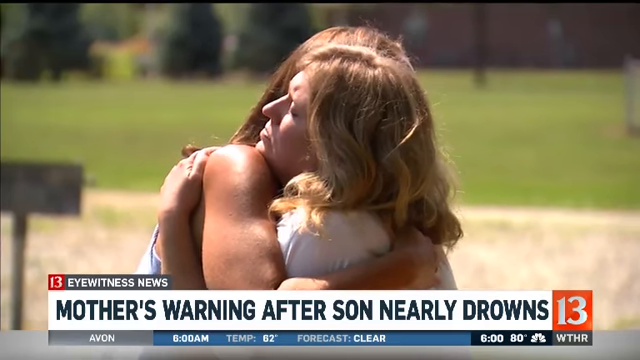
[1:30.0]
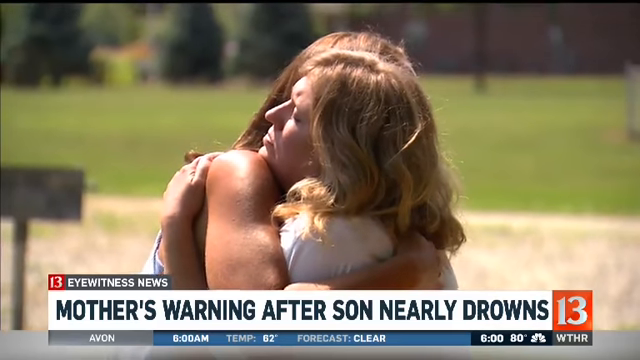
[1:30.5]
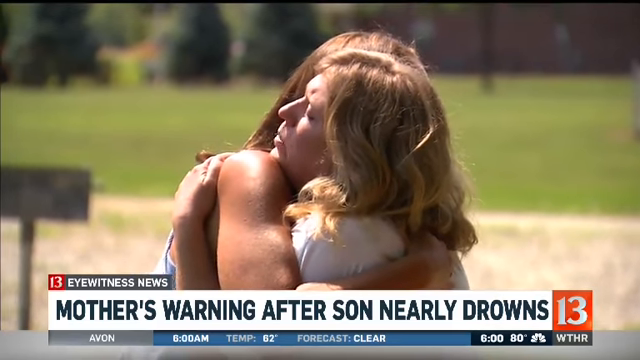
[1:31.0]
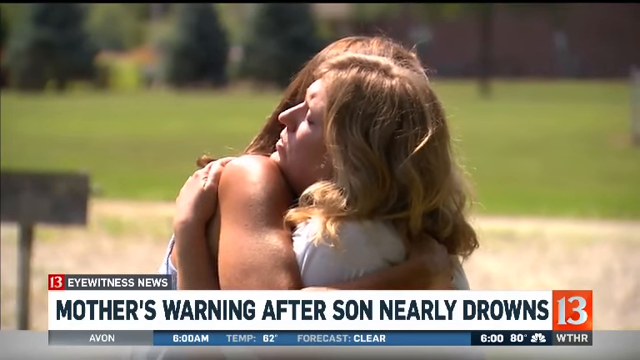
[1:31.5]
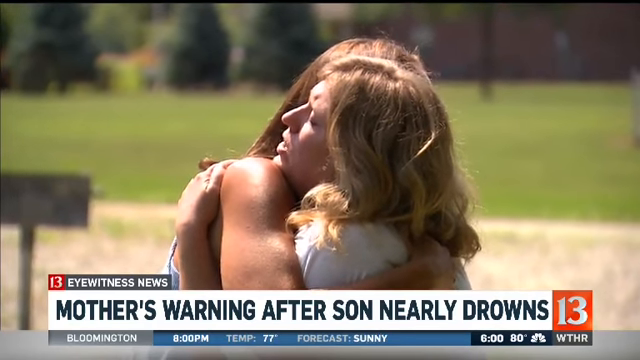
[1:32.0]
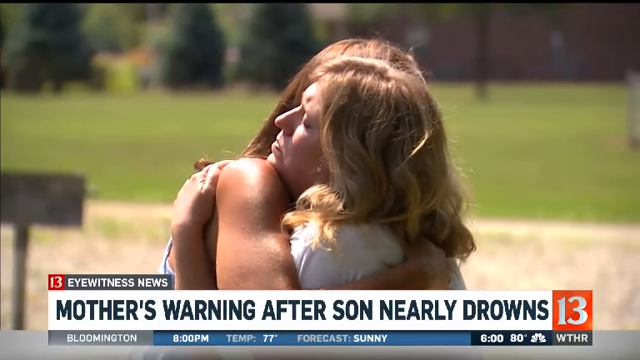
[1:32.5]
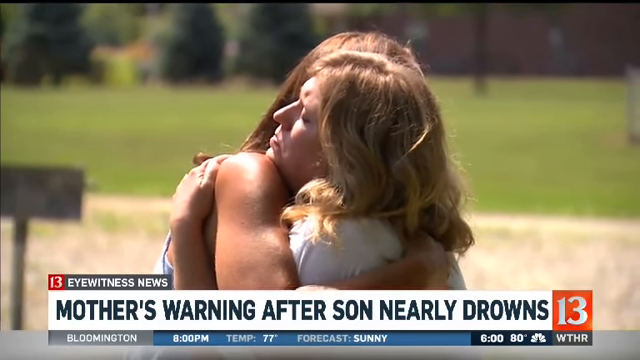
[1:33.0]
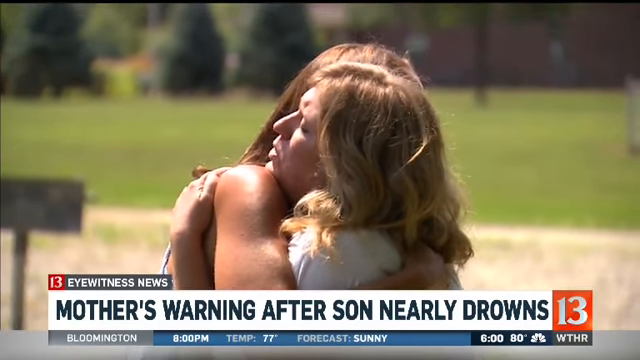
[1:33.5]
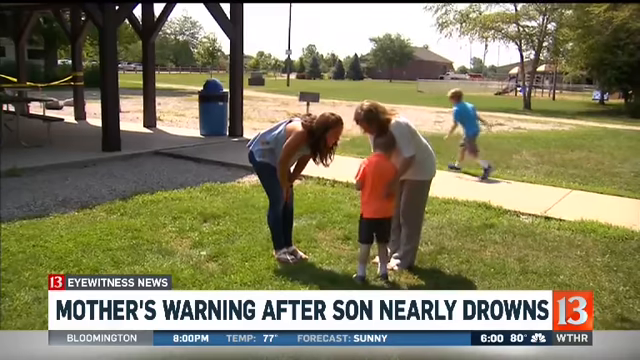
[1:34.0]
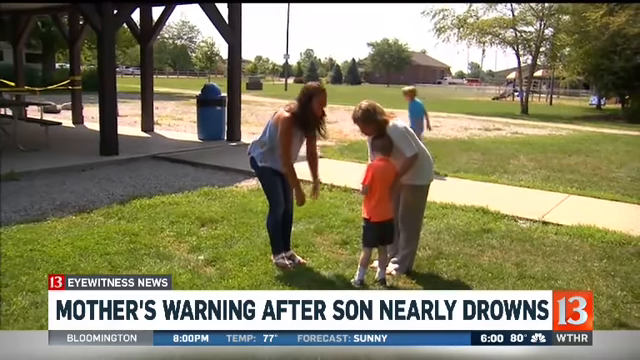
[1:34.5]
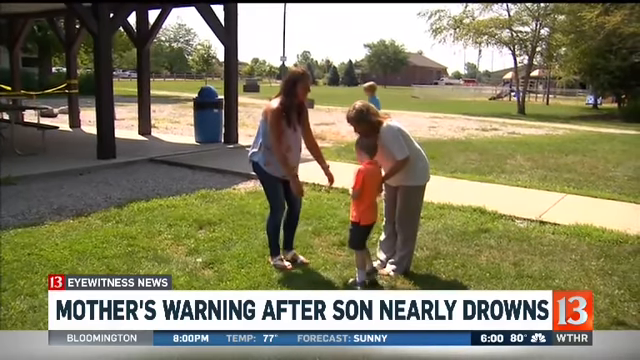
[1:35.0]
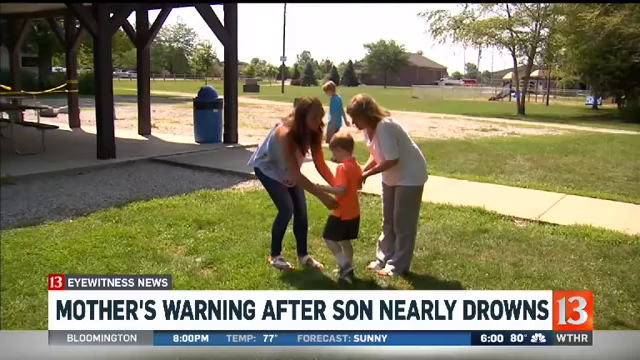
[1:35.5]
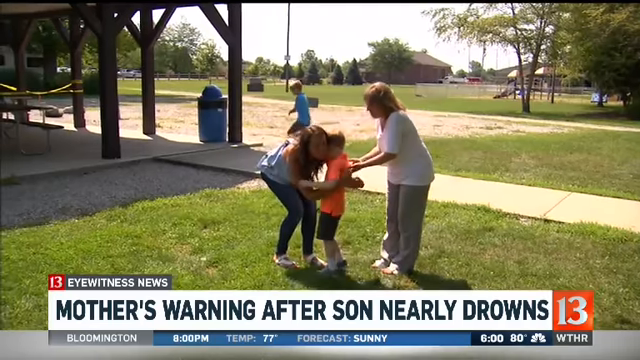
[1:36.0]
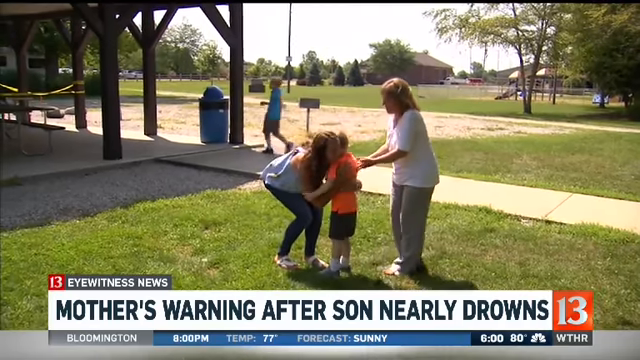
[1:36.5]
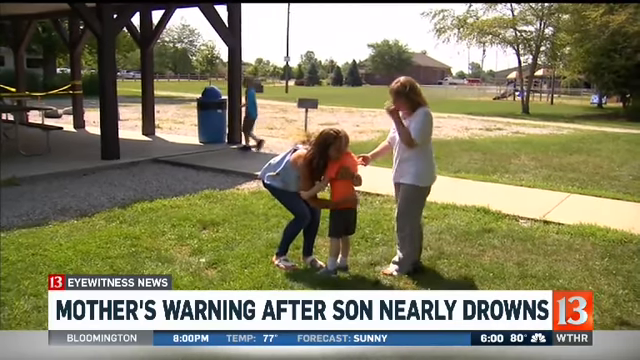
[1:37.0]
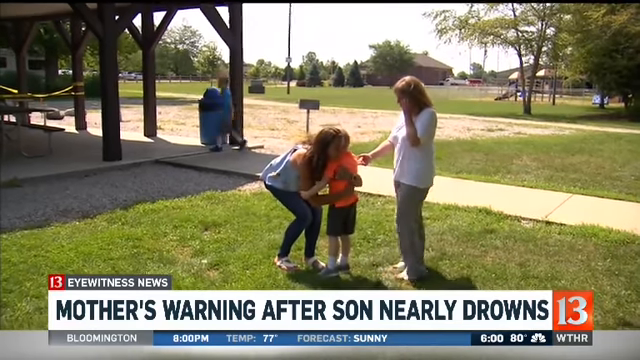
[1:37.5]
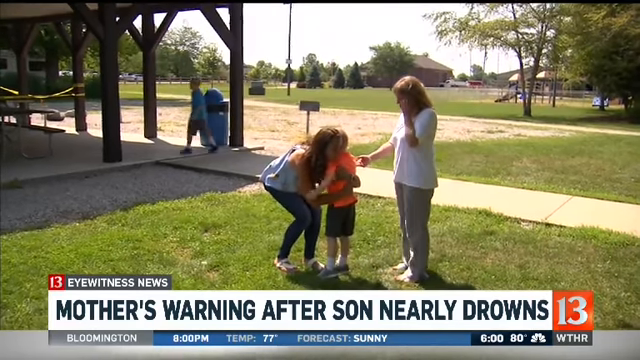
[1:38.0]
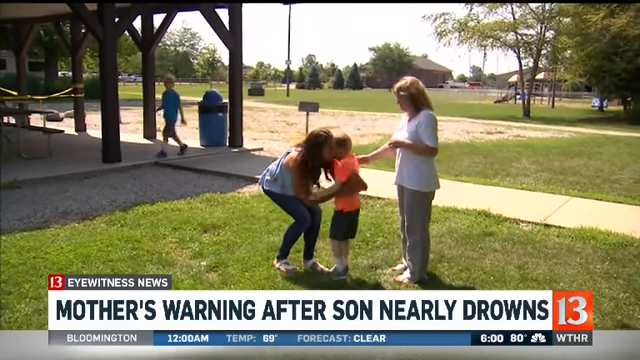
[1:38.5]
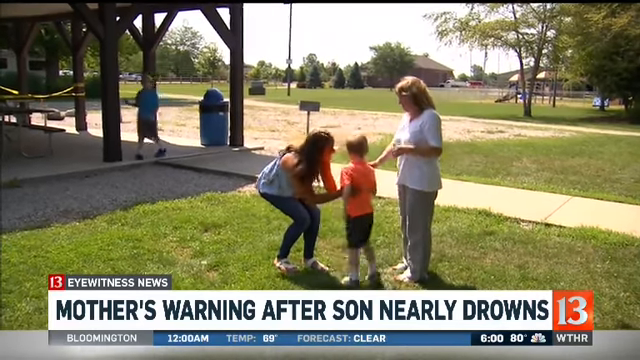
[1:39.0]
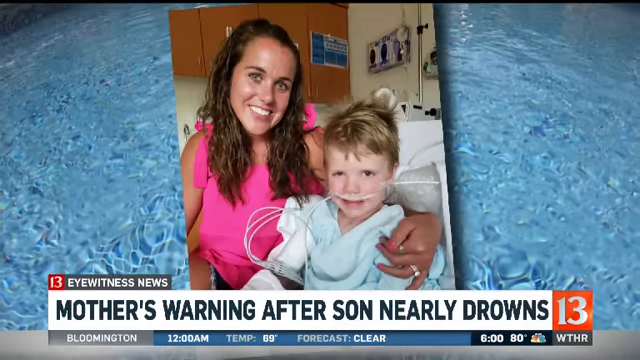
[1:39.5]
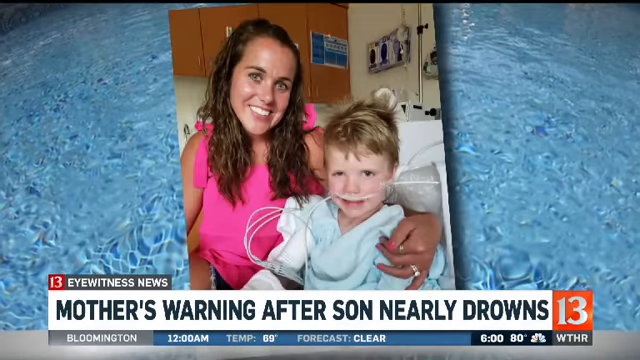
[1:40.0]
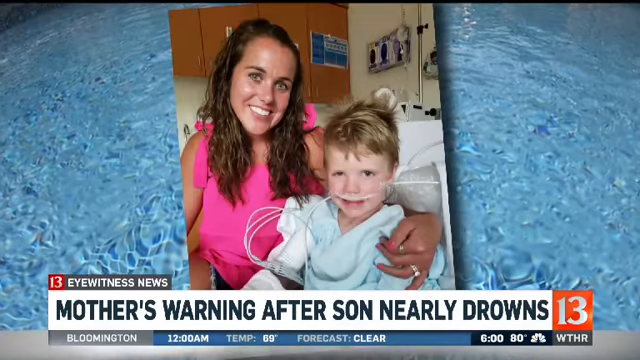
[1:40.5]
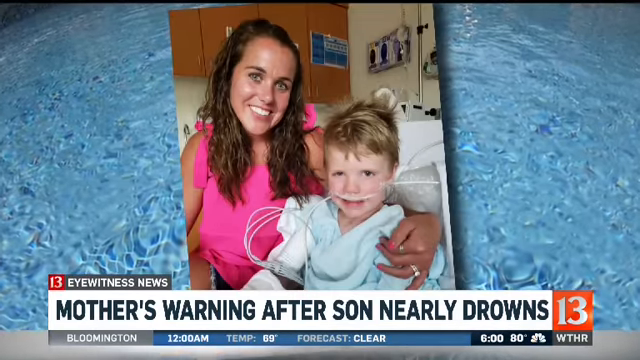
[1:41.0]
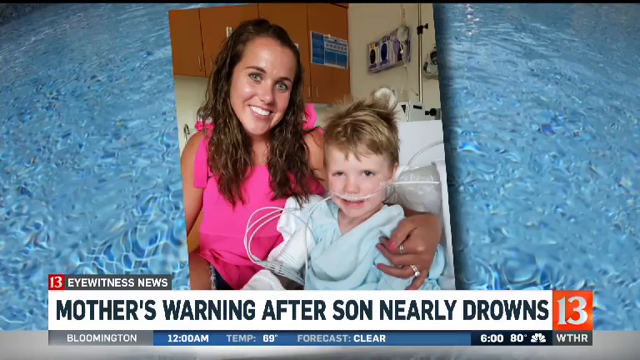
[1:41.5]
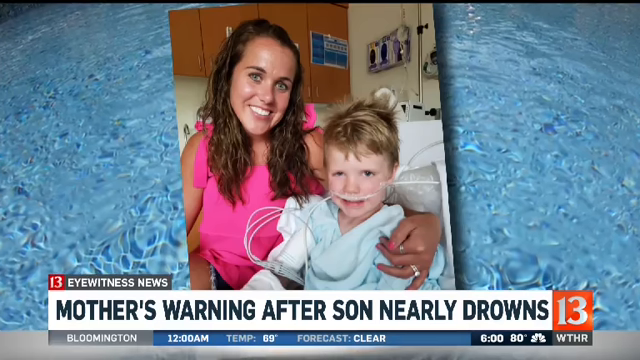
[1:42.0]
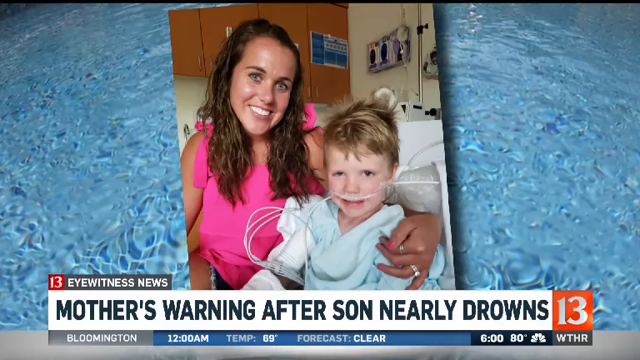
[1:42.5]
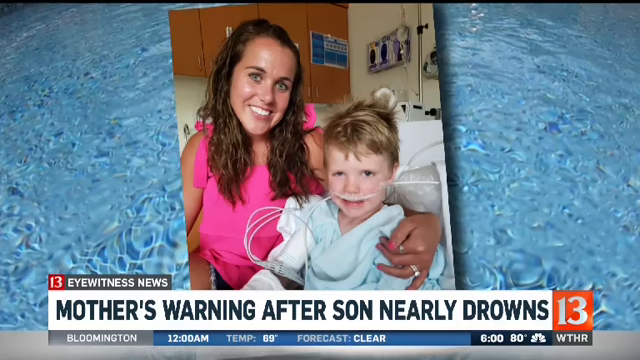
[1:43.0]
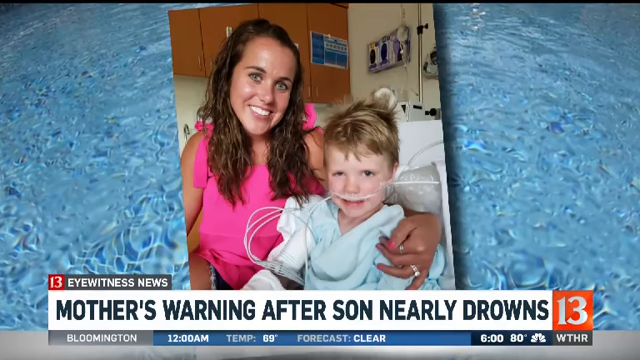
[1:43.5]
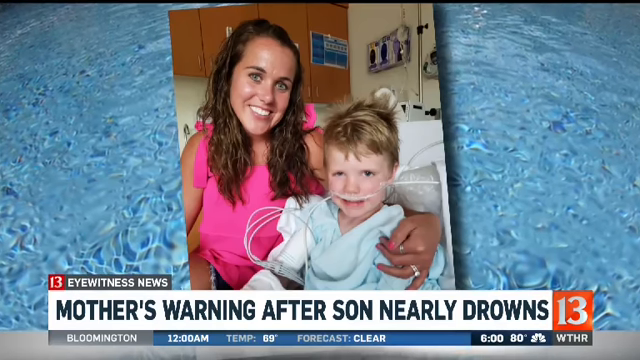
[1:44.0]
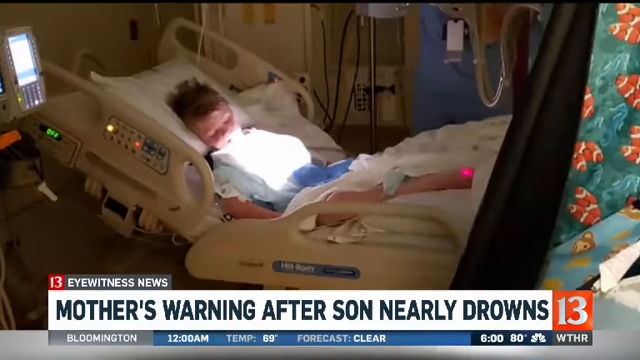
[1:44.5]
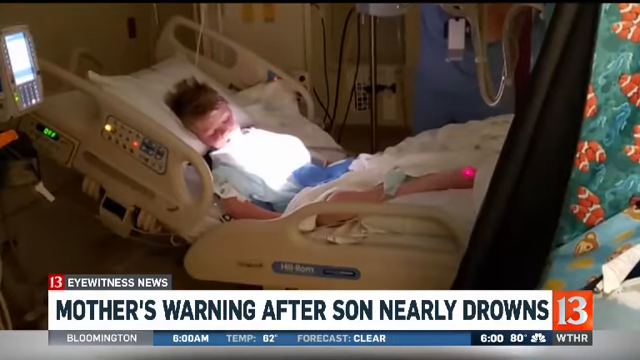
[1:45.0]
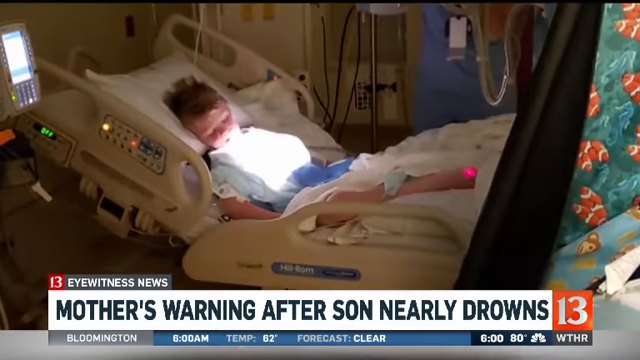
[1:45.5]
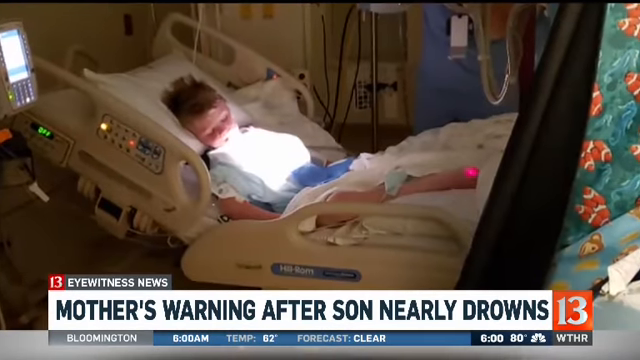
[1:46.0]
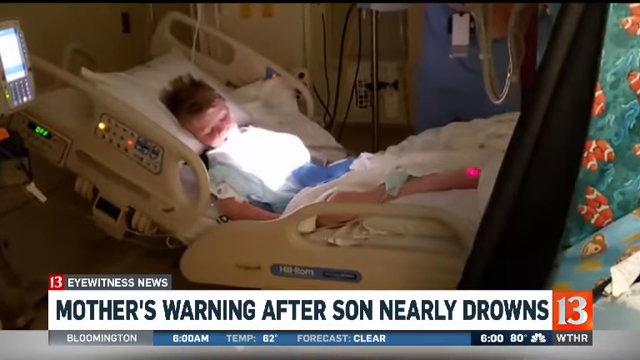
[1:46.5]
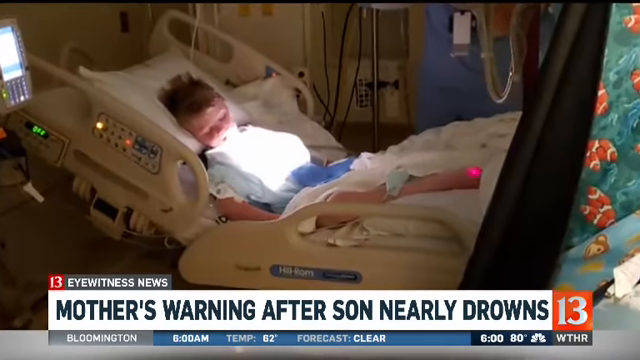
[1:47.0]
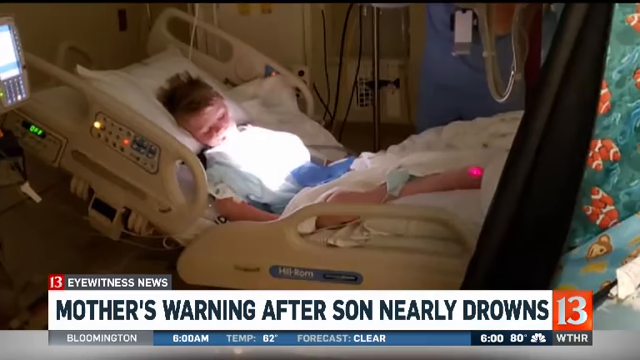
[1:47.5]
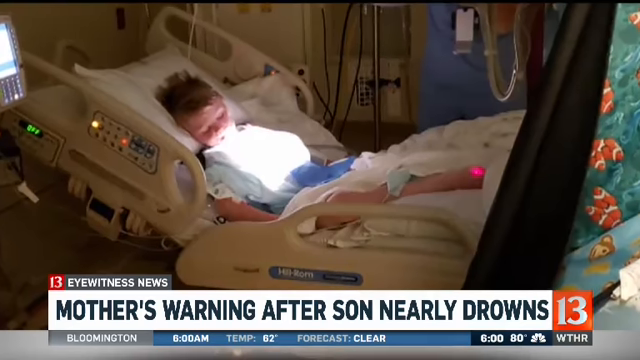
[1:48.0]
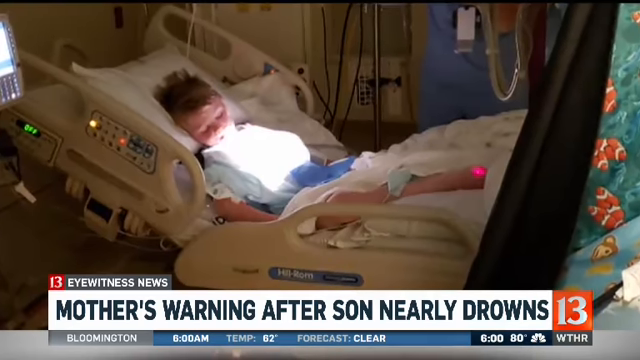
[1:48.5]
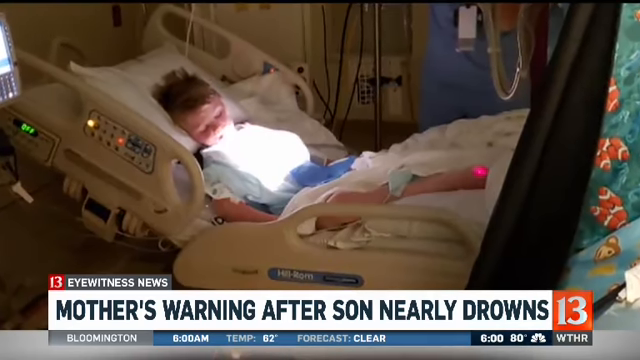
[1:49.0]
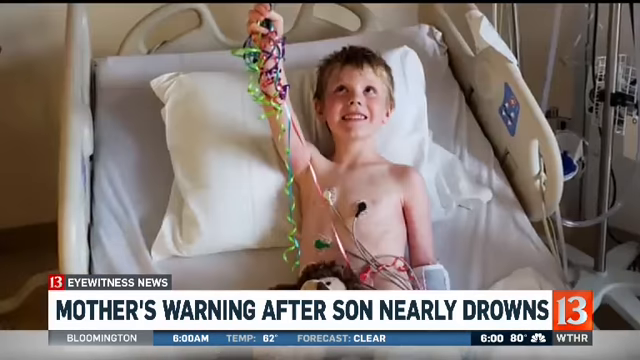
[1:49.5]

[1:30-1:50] Two women hug and embrace each other under the text "Channel 13 Eyewitness News, mother's warning after son nearly drowns"; one of them is apparently the mom. It is daytime with sunlight, and there is a lot of grass in the background. The little boy who almost died appears in an orange shirt, hugged by a woman who is apparently the one who saved him. Then the little boy is shown in a hospital bed with the woman who saved him next to him. She has light-colored eyes, pretty teeth, brunette hair and a pink top.